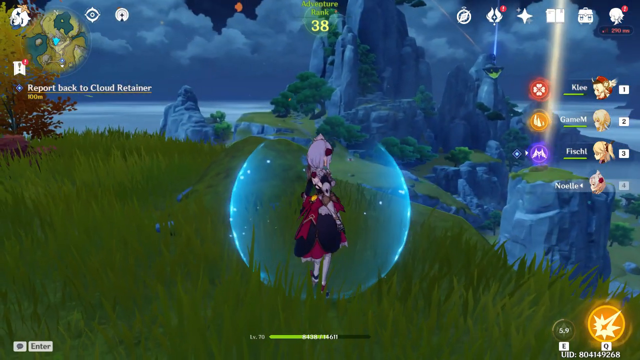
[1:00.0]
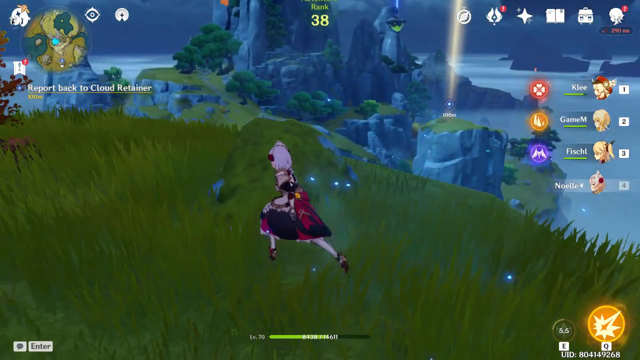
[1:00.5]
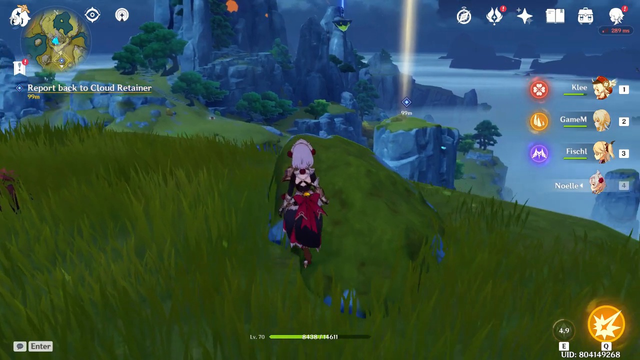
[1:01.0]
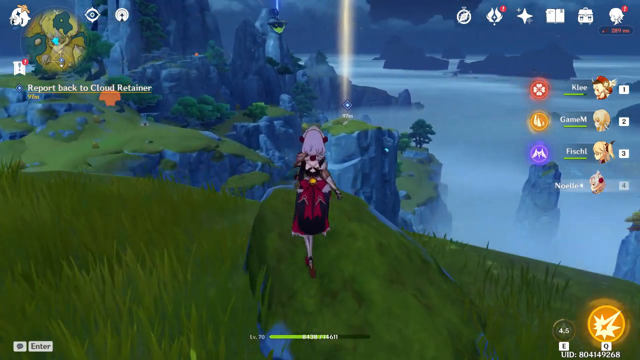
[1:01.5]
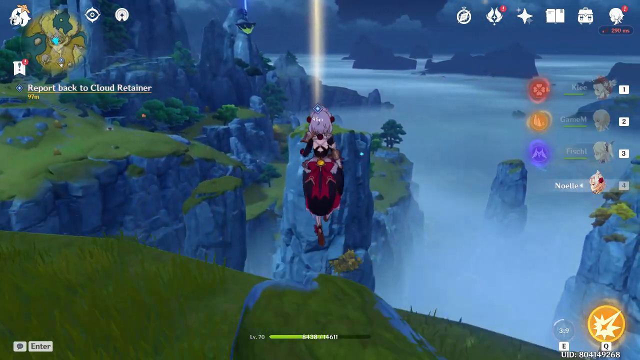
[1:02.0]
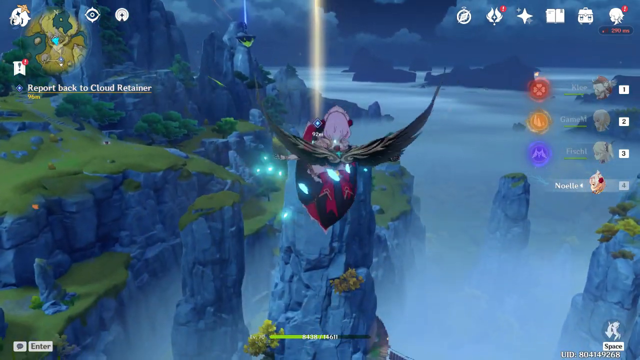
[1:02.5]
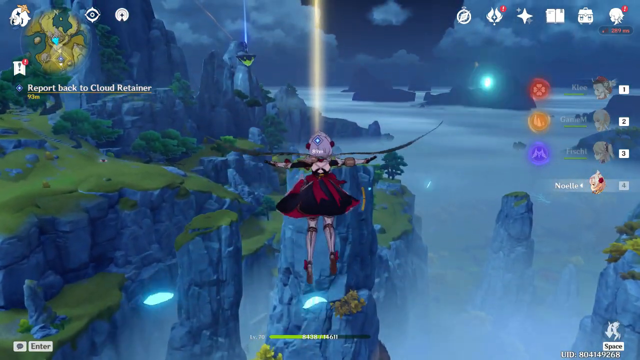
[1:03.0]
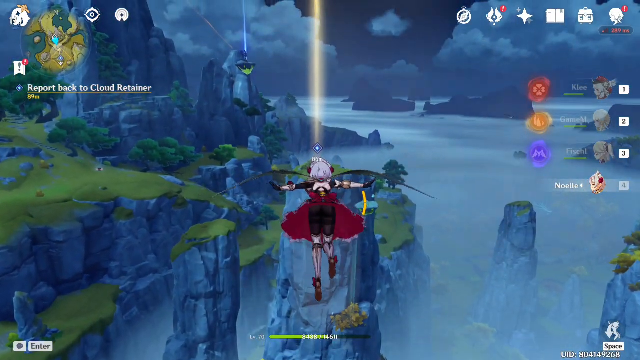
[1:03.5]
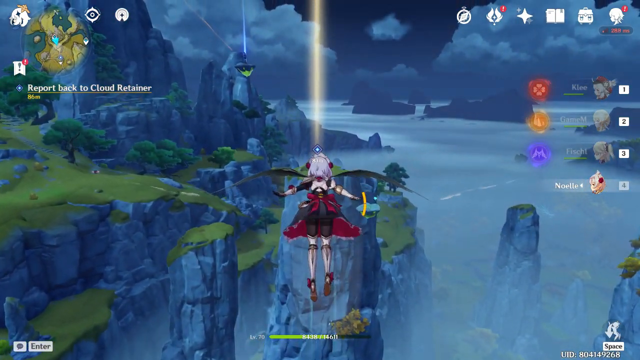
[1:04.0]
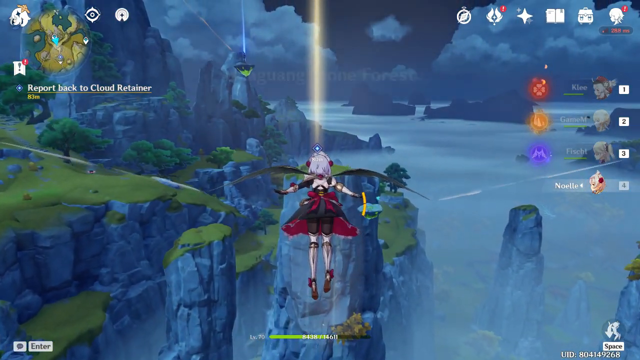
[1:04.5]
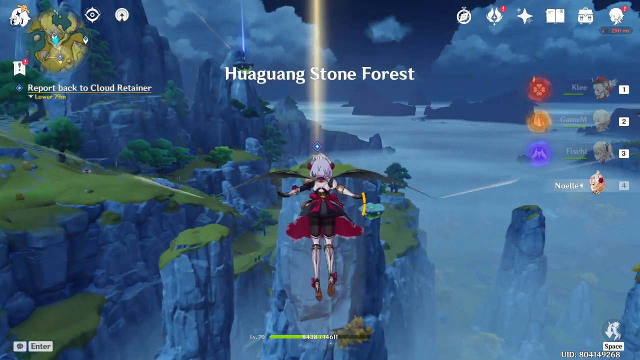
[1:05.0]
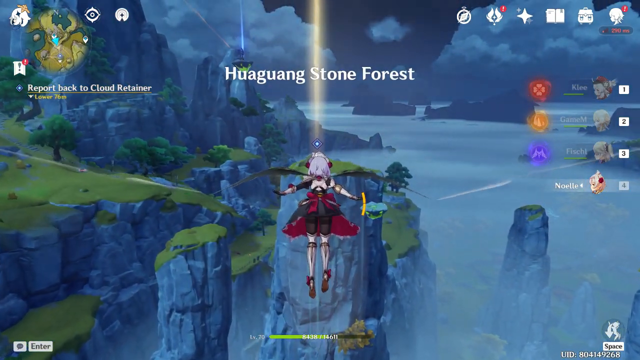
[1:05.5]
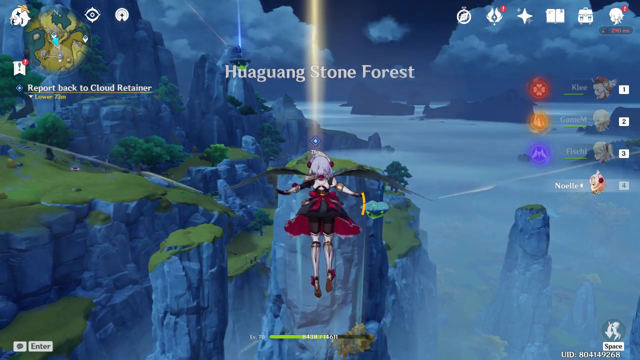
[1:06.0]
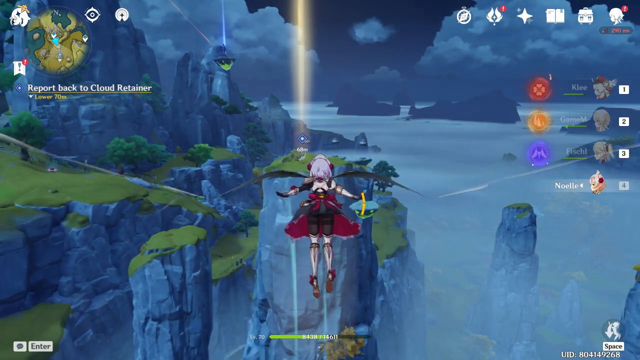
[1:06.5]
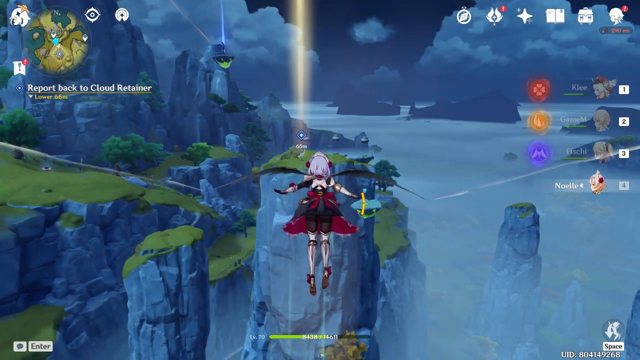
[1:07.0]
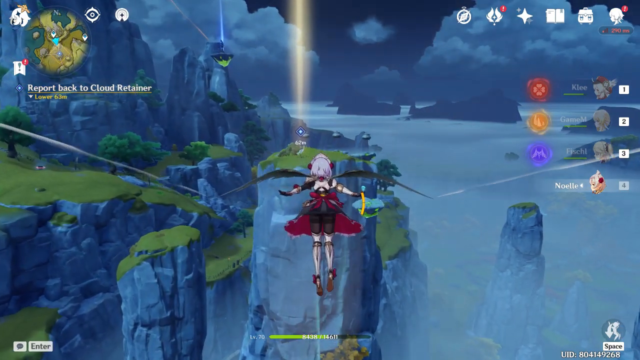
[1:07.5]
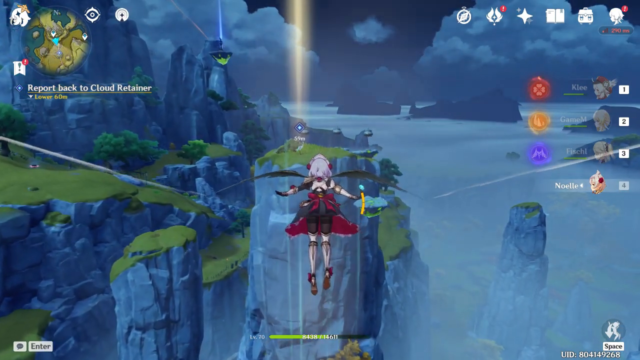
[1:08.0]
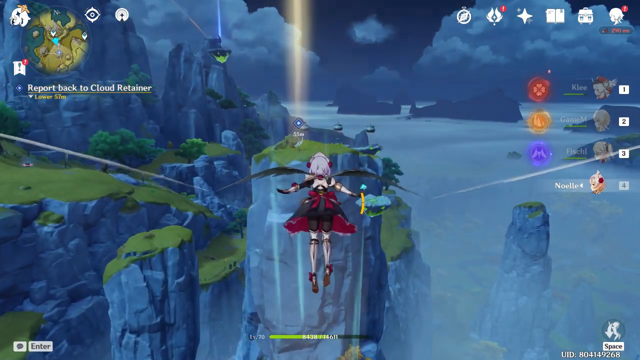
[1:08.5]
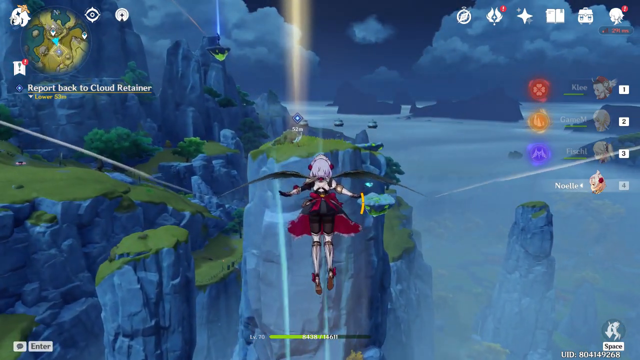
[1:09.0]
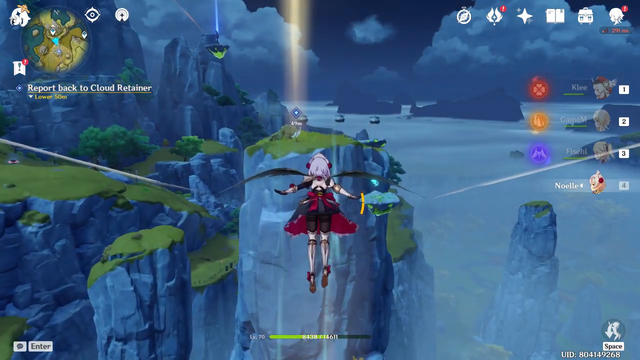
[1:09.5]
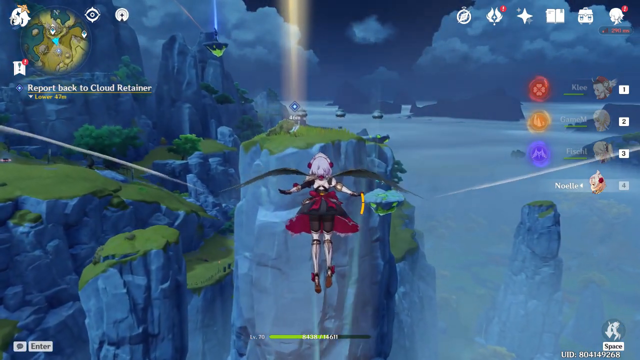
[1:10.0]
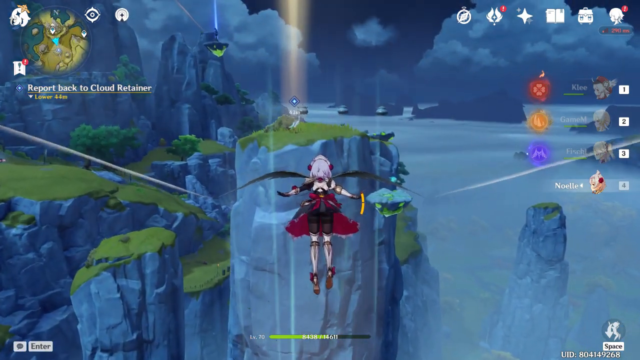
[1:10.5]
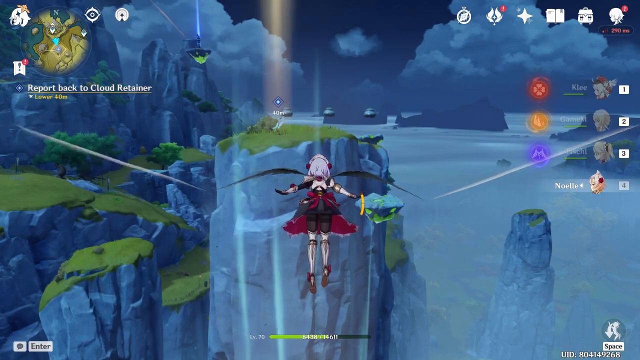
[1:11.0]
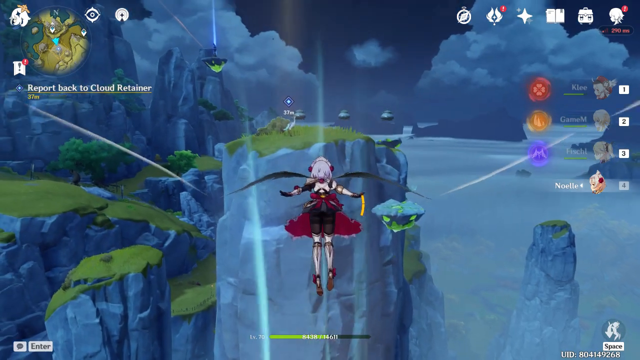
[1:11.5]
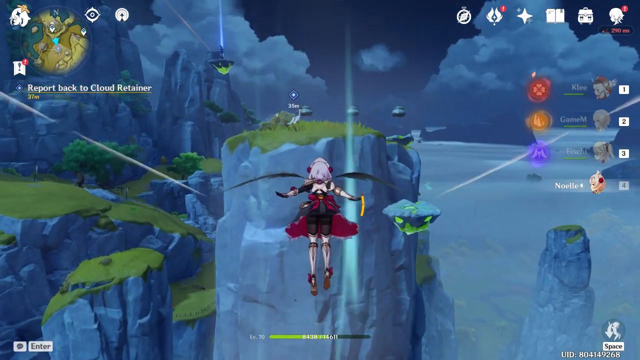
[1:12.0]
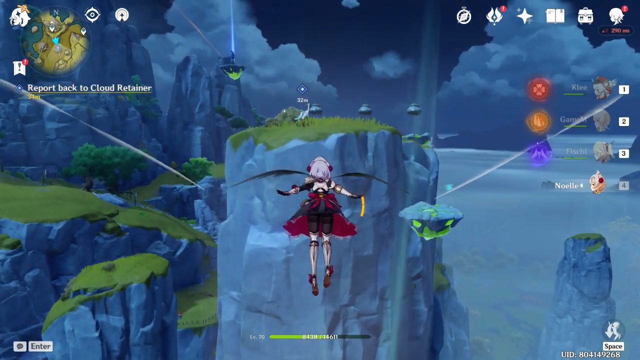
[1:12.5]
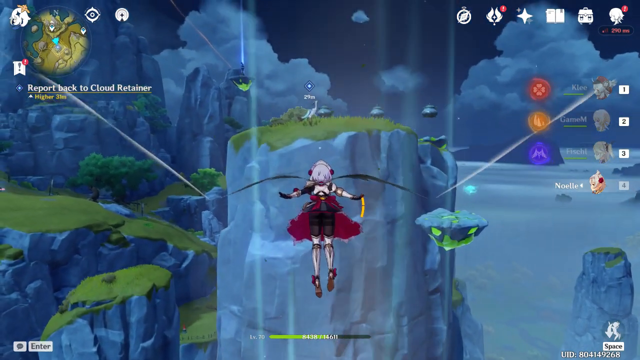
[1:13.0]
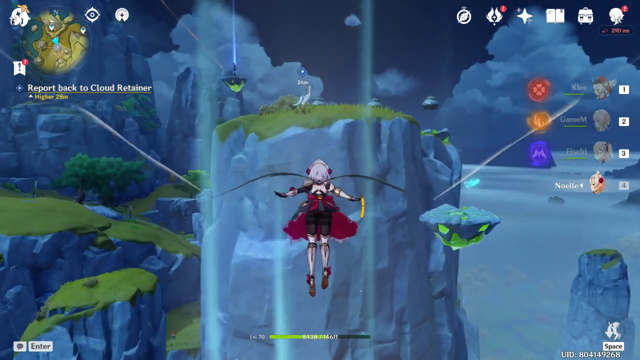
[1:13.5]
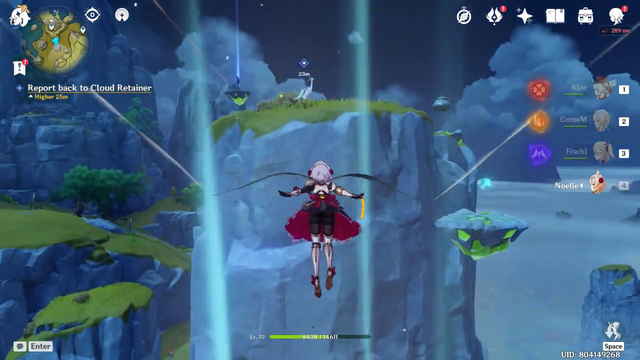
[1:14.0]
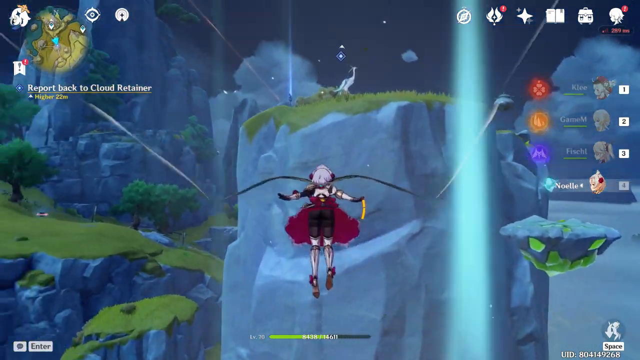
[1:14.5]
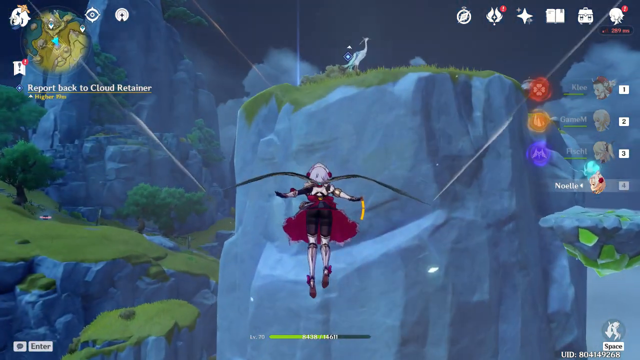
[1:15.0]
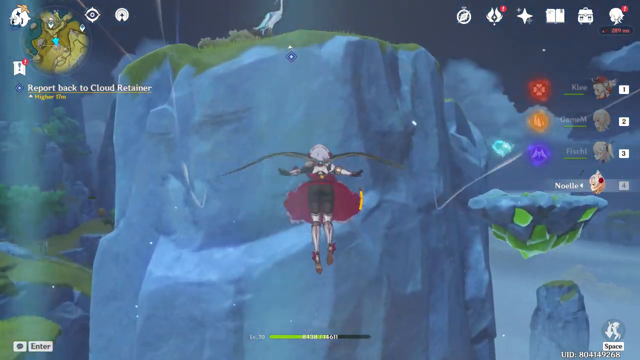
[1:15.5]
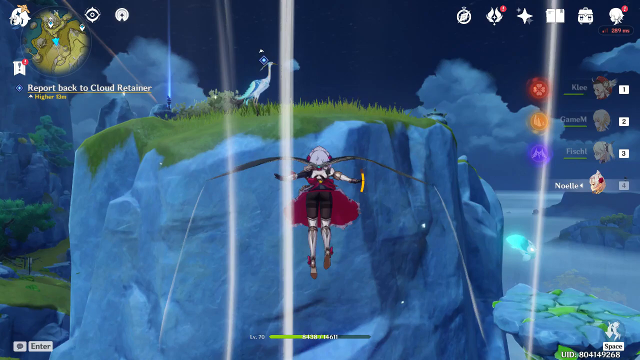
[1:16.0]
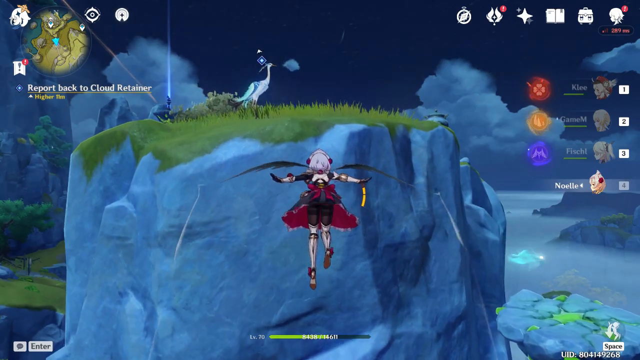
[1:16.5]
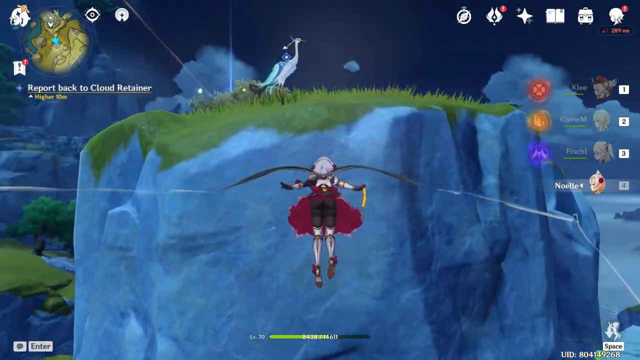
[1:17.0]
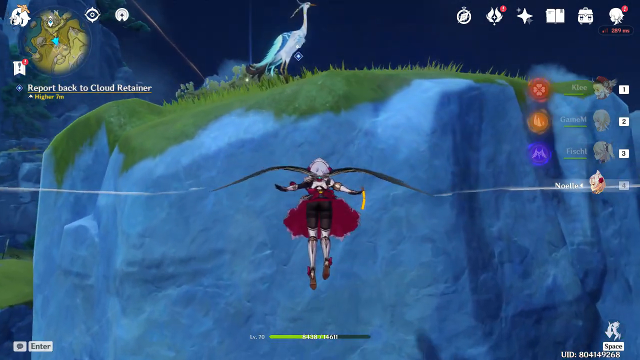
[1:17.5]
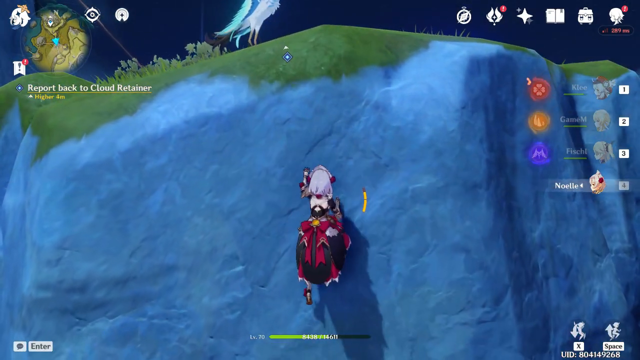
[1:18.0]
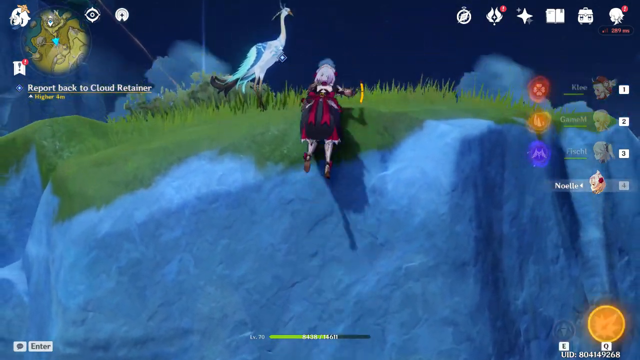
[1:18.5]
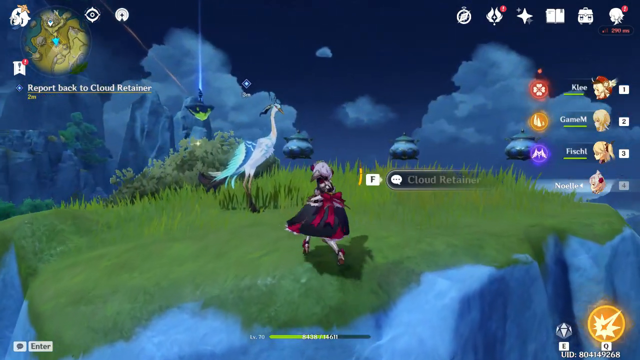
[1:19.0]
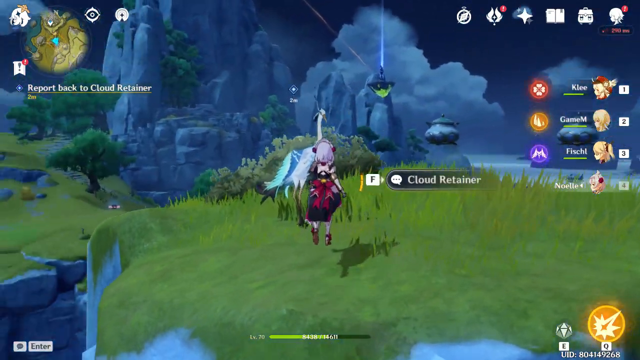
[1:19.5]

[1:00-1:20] The anime girl with black wings jumps from the top of a rock on the cliff and glides through the air without flapping her wings. Her health meter is visible on the side of her. She lands on top of the cliff next to the crane that was standing there before. The crane is white with fluffy feathers and has two blue feathers coming from his eyes, one going up and one going down. He is taller than the girl and stands by a bush, and behind him a light shoots up into the sky. The sky is partly cloudy, with clear cracks and big fluffy clouds. The rocks rise above the thick clouds, so the ground below cannot be seen. Teapots are off to the right-hand side.